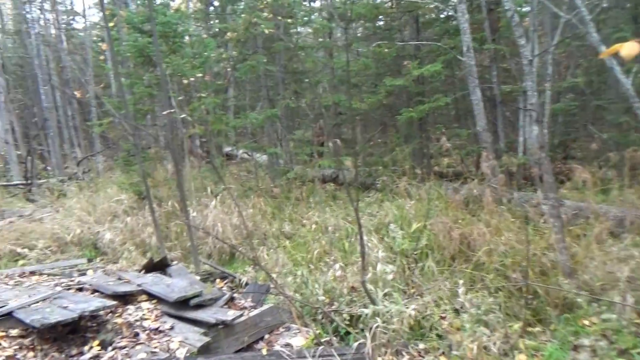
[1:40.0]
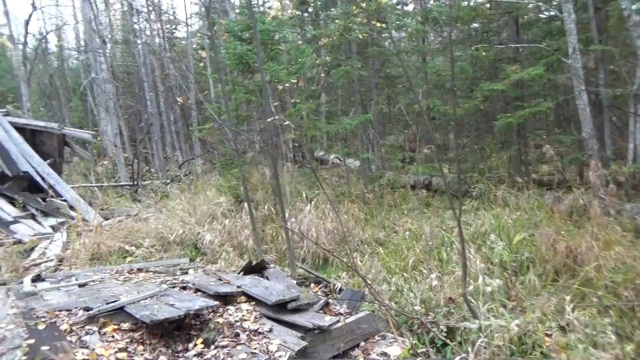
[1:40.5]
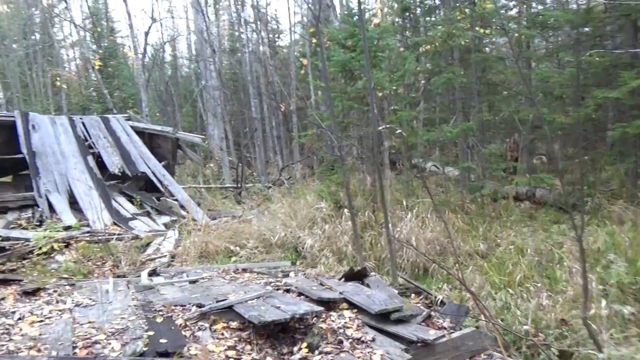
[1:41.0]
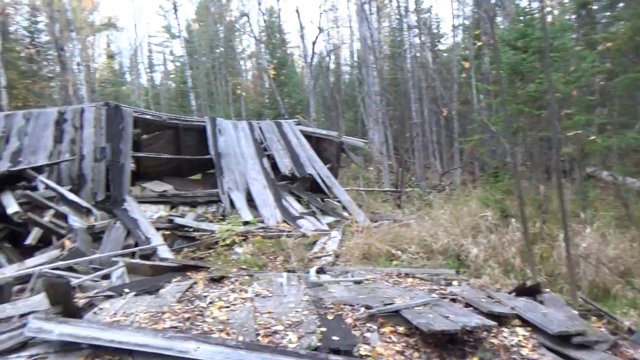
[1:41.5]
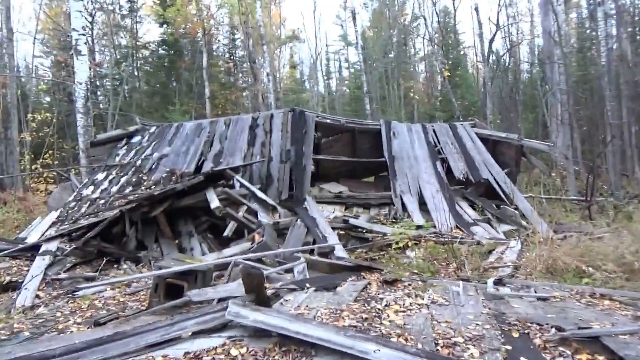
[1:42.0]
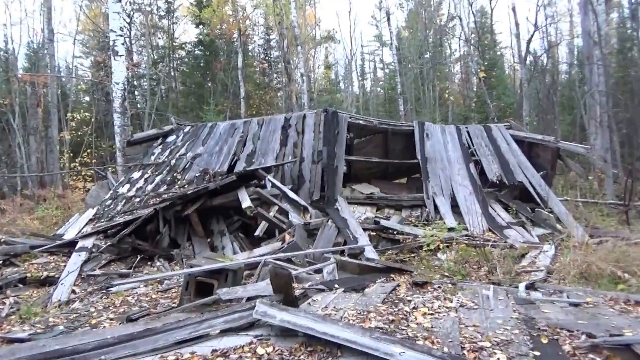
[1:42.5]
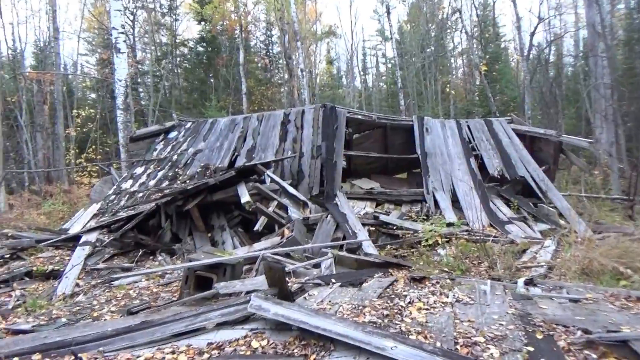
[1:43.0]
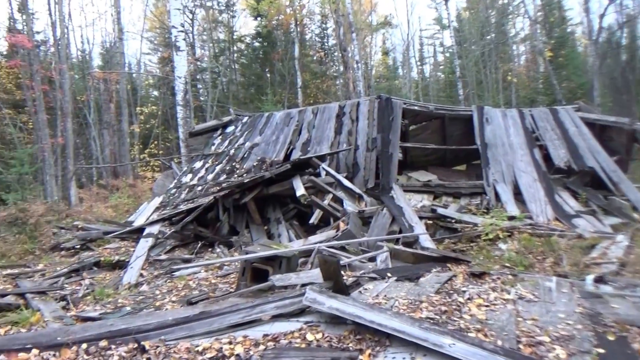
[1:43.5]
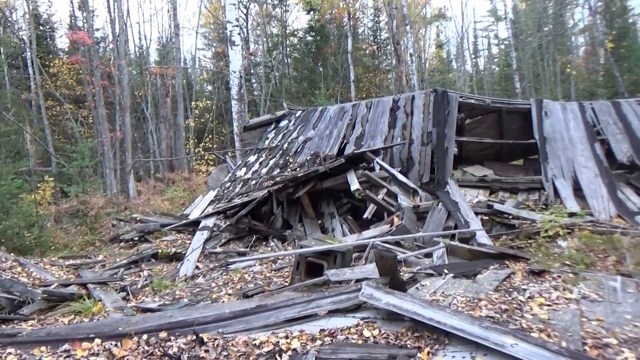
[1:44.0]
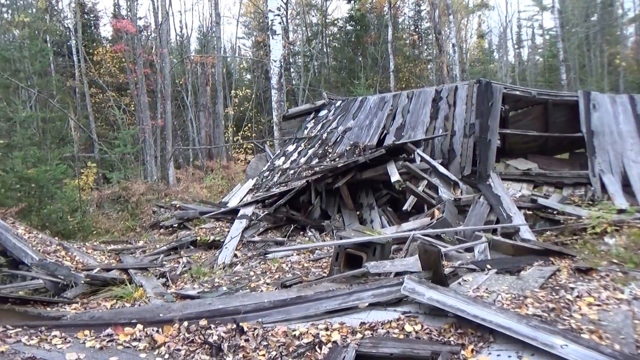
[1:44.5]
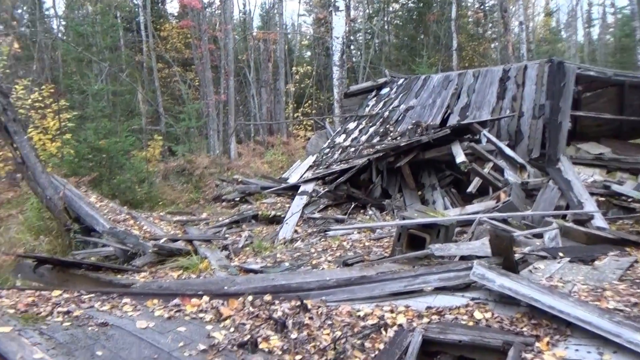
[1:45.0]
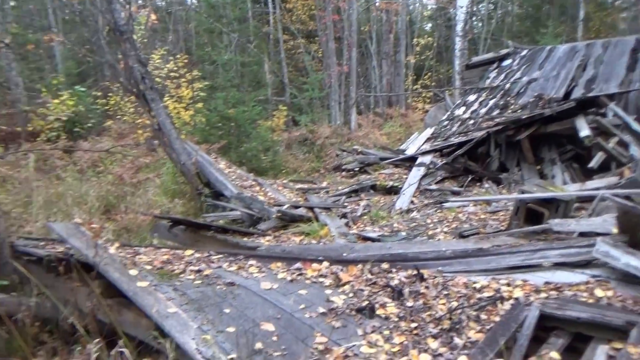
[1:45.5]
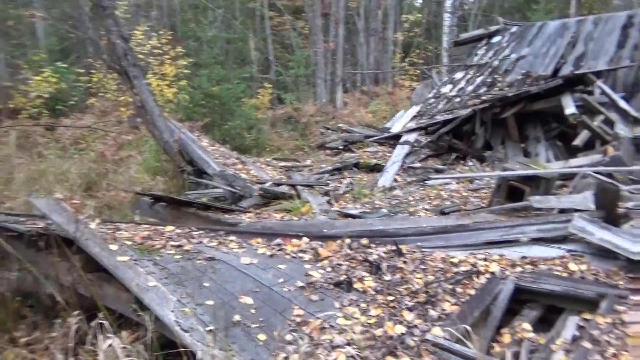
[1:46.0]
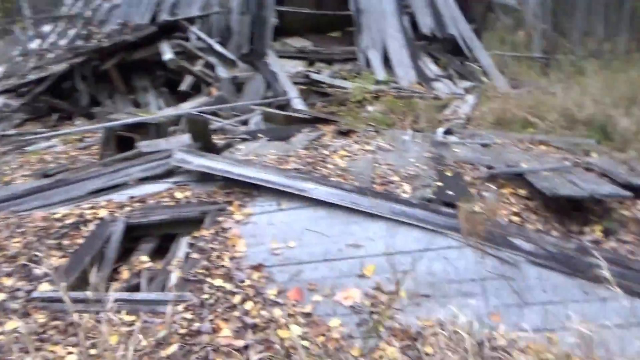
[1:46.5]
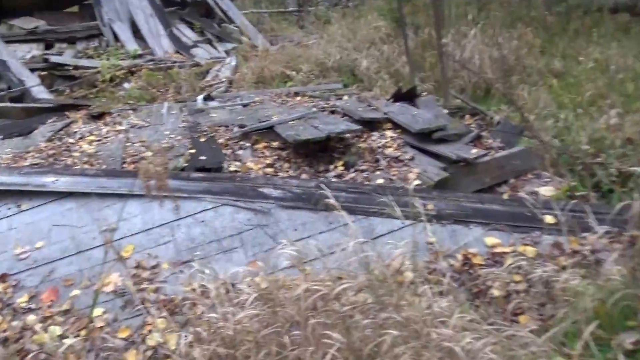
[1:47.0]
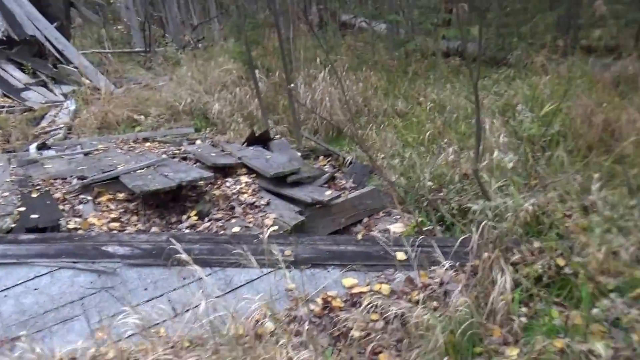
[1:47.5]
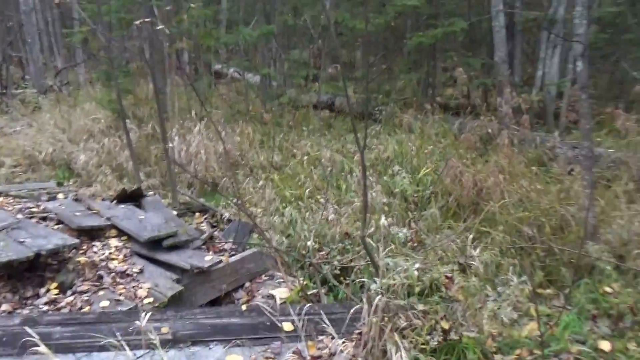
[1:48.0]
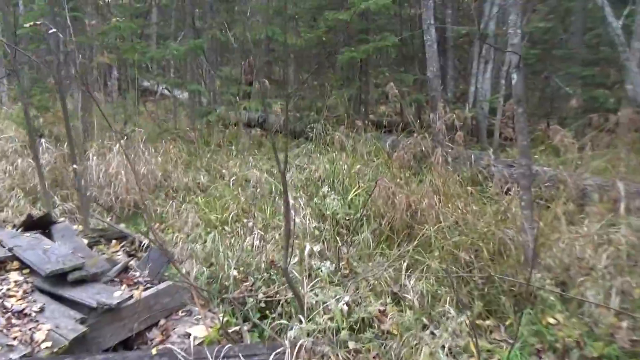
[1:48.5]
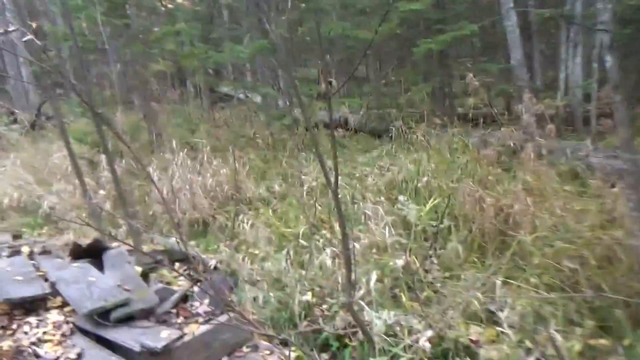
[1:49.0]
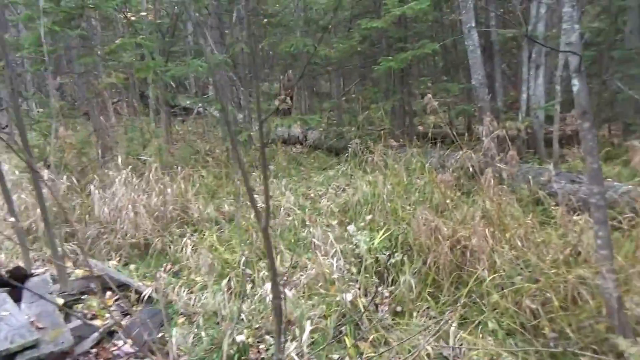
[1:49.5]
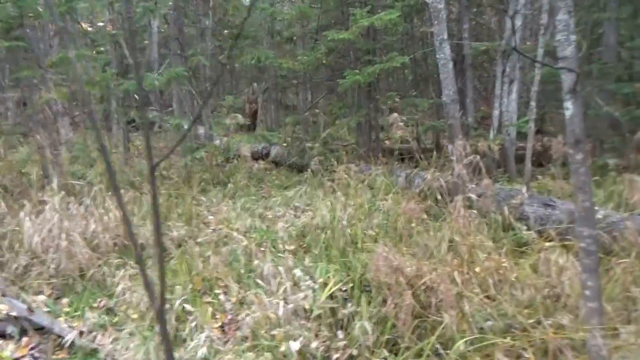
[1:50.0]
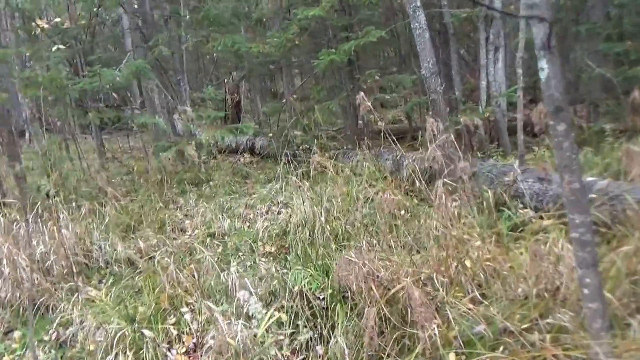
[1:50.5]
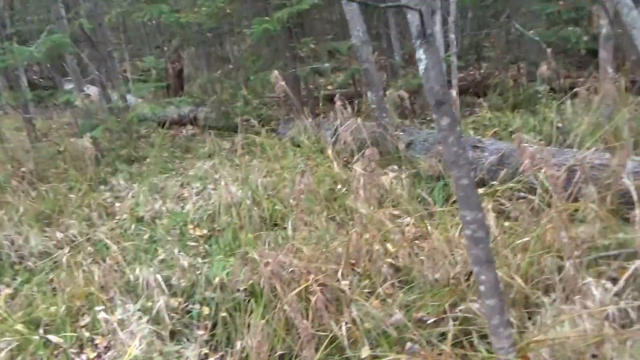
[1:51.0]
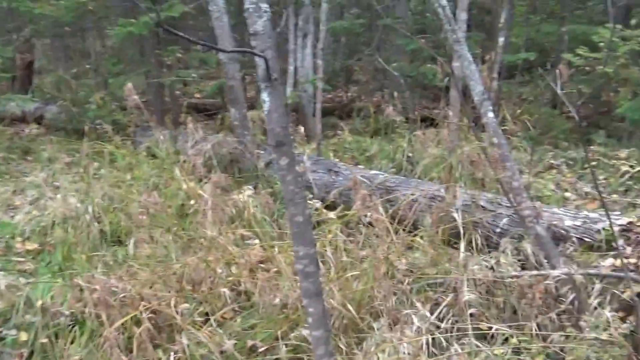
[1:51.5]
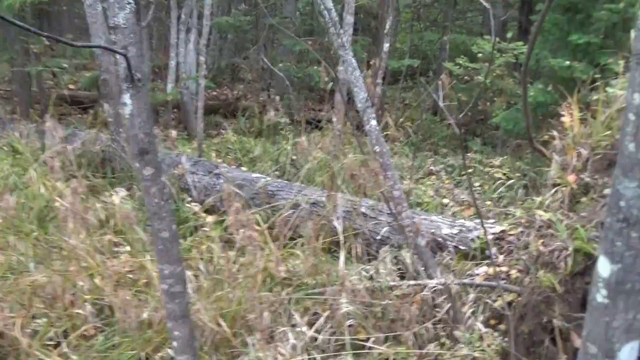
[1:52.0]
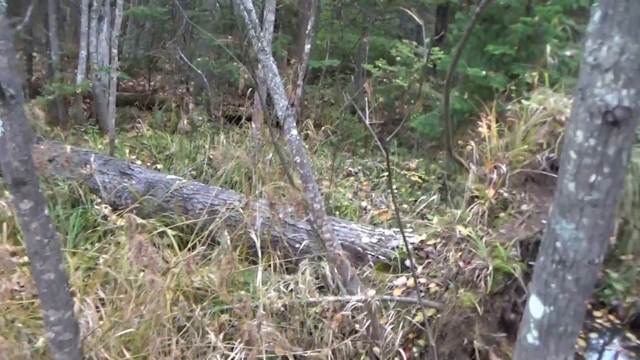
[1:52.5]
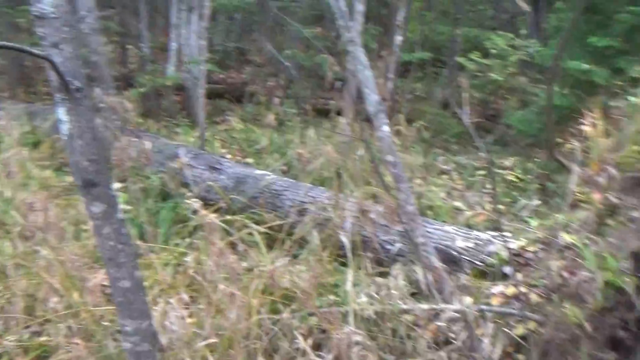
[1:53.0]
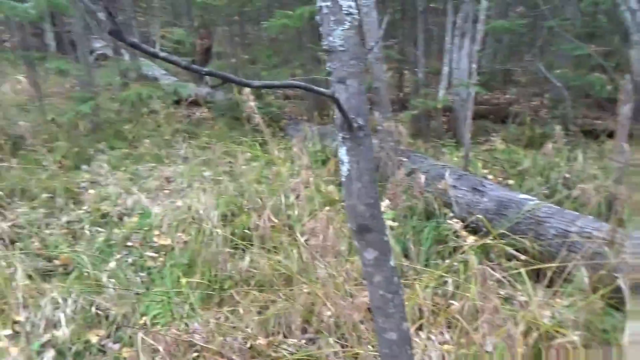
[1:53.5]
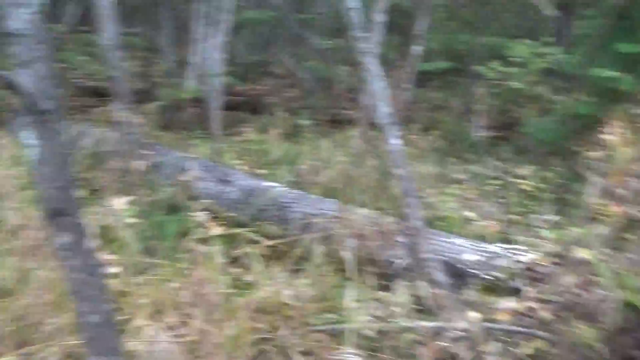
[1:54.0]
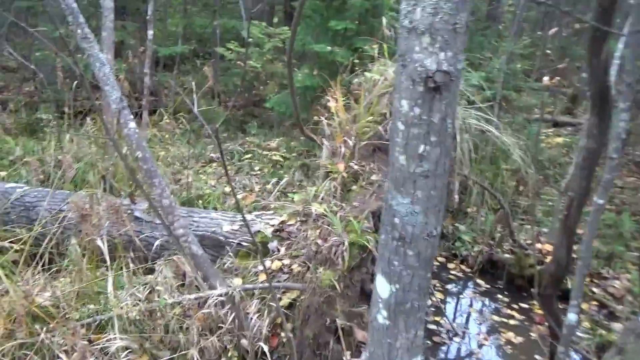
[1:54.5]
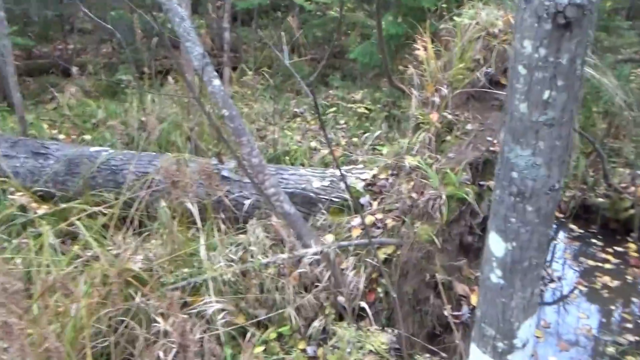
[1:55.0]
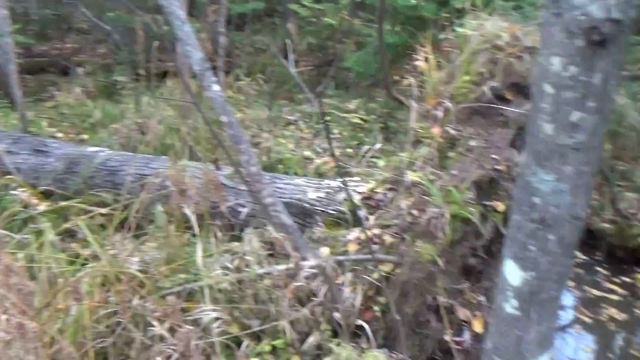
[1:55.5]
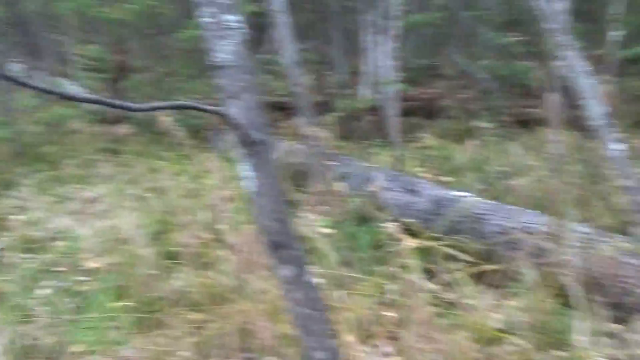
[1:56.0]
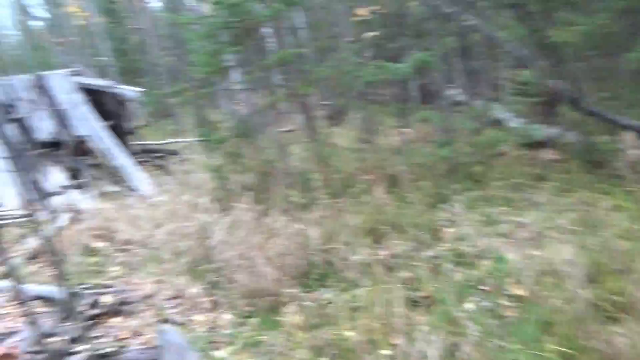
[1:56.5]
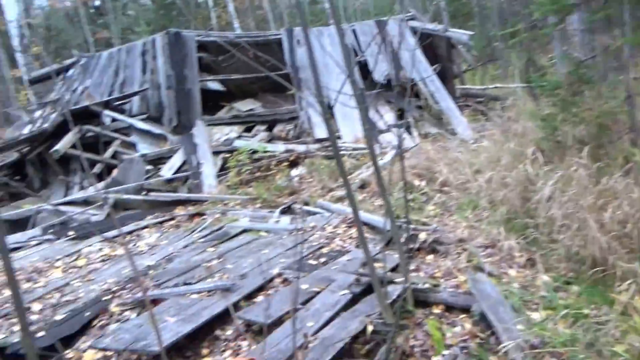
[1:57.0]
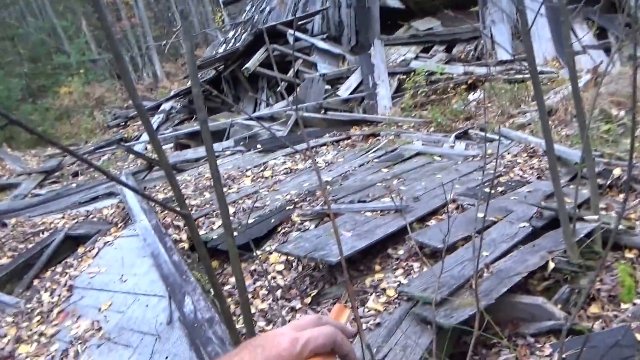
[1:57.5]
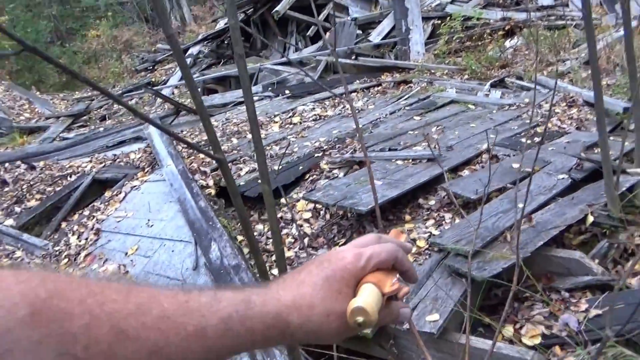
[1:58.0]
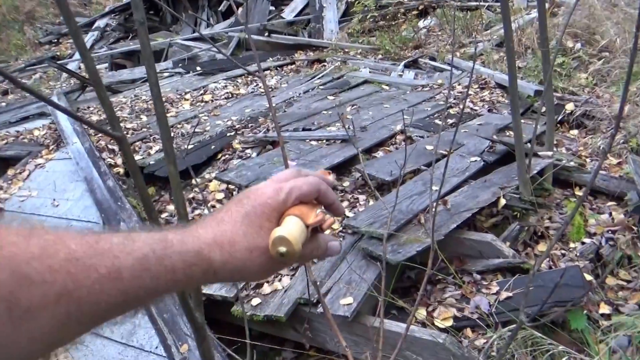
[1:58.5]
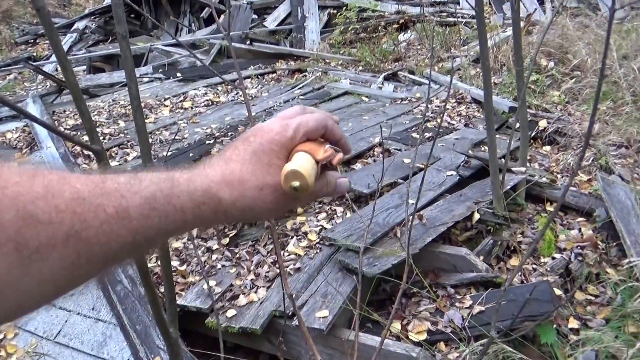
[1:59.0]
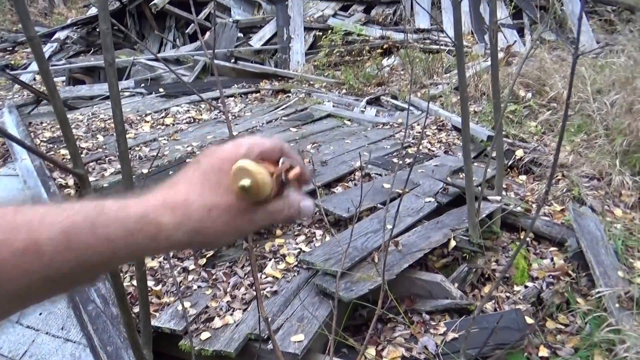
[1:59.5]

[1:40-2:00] The camera pans back into focus onto the centre of the collapse to the left, then quickly pans right towards the ground, where there are broken wooden beams. The person moves to the right into the grass; a broken tree trunk lies on the ground in front of him, along with many other tree branches. He uses his left hand to point towards the broken wooden beams on the ground to his left. He walks right into the clearing on the grass, then the camera pans left. He holds up the tool and points to the ground on the left. The broken structure is in the background; on the ground there are lots of wooden beams or boards, and in front of them around five thin tree branches.